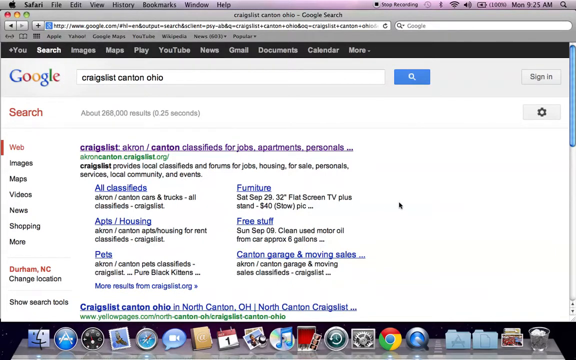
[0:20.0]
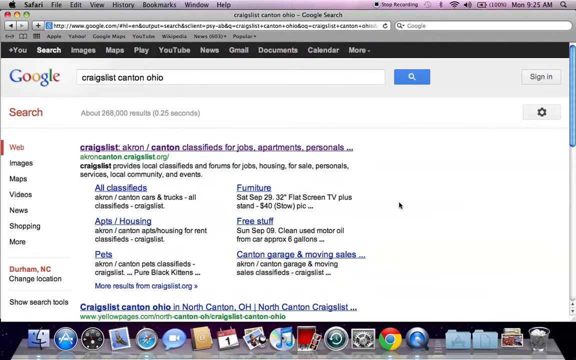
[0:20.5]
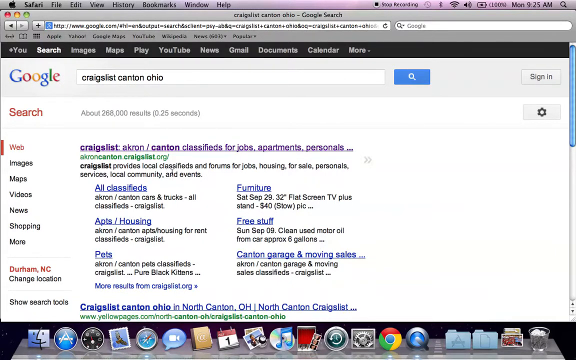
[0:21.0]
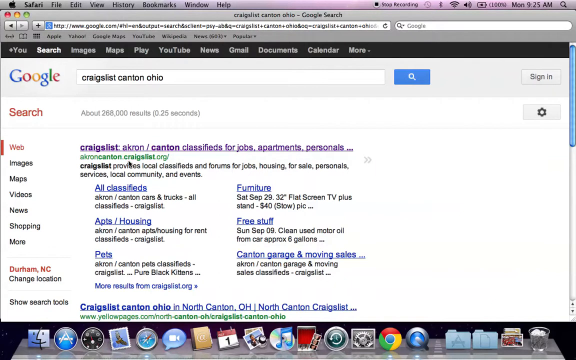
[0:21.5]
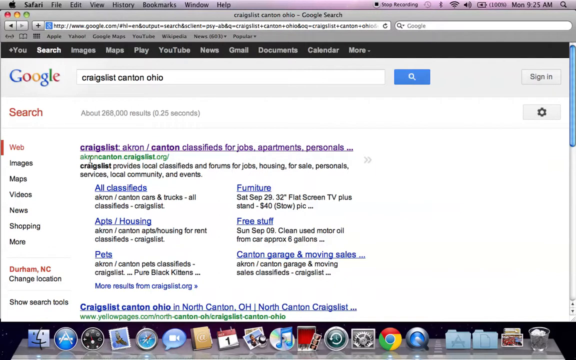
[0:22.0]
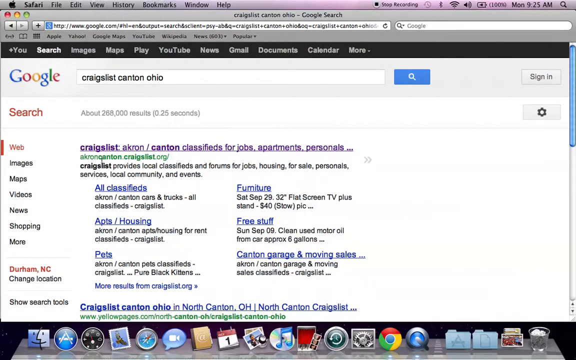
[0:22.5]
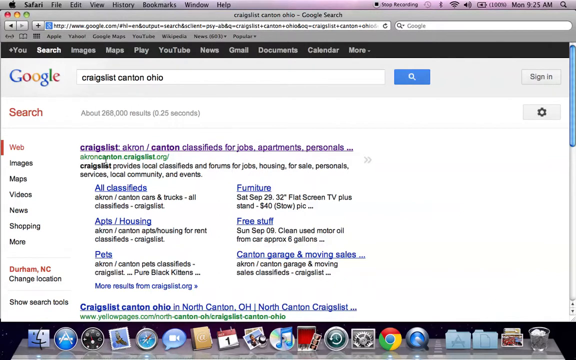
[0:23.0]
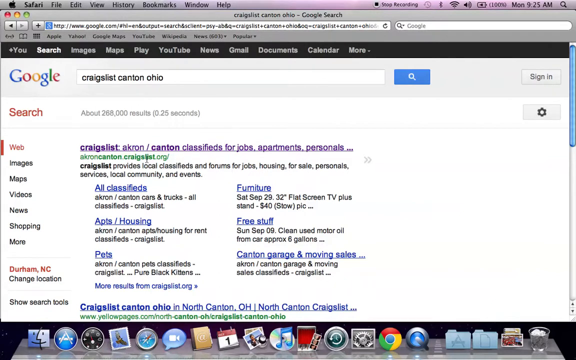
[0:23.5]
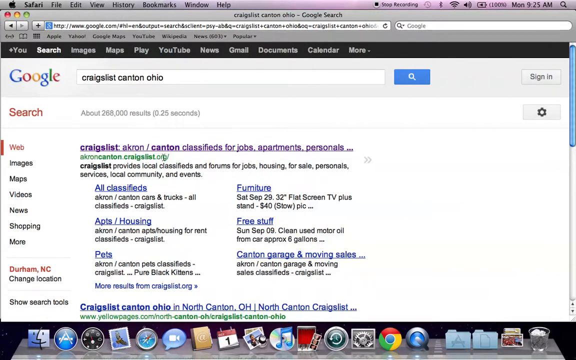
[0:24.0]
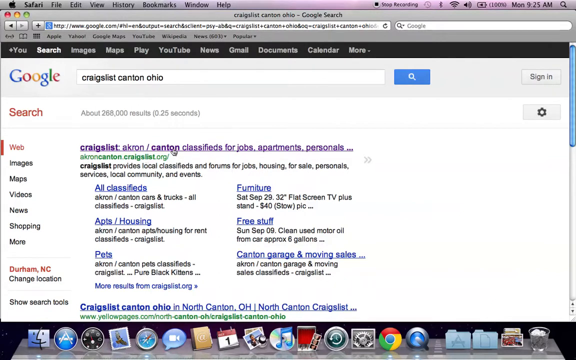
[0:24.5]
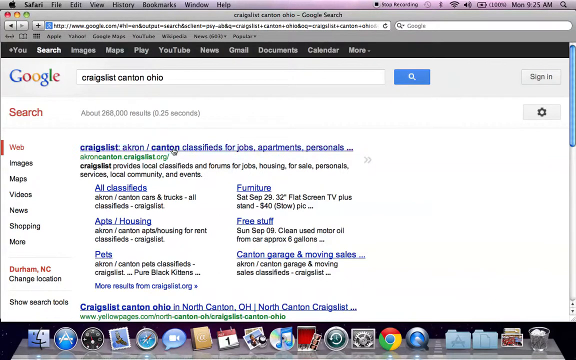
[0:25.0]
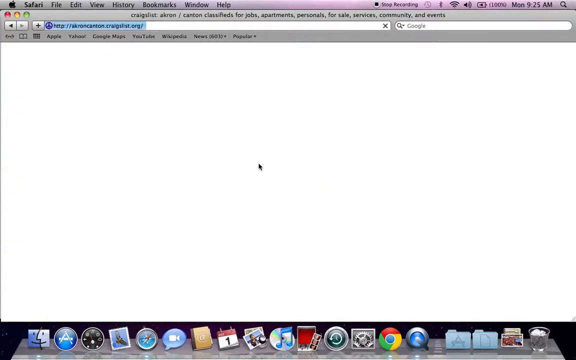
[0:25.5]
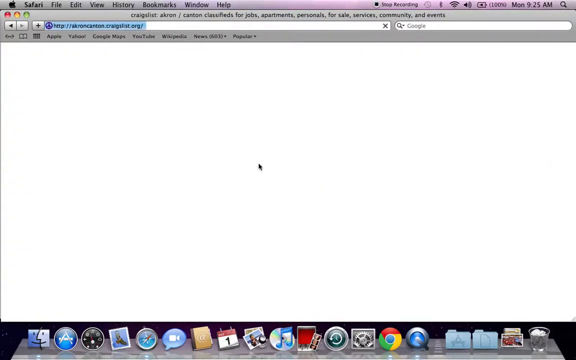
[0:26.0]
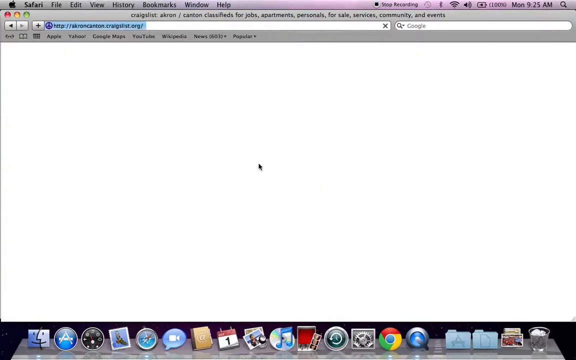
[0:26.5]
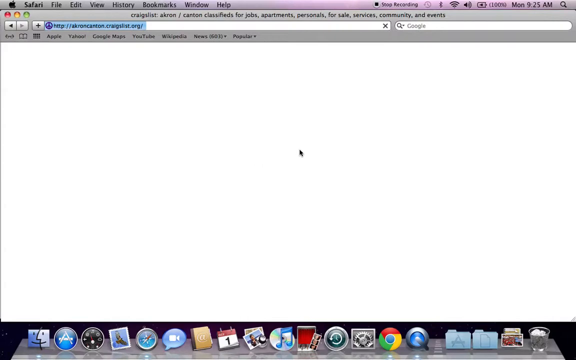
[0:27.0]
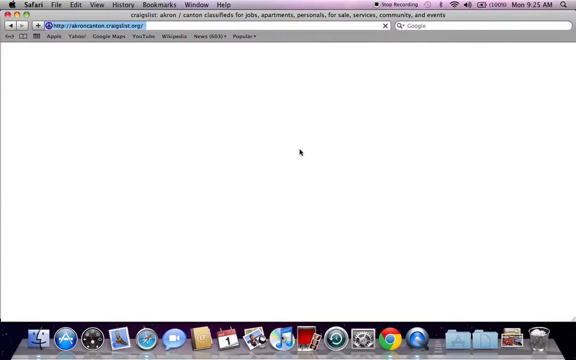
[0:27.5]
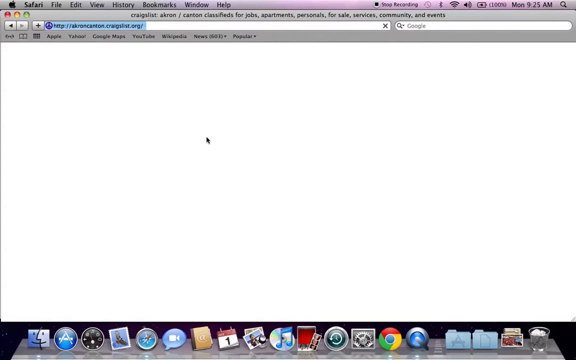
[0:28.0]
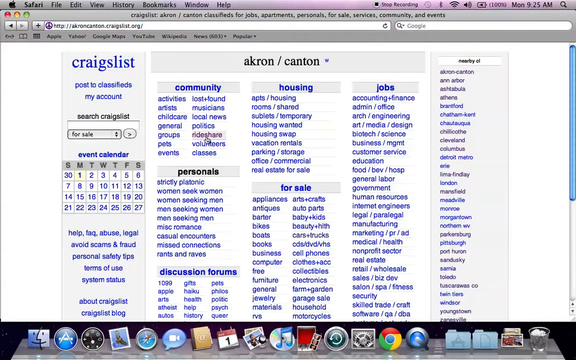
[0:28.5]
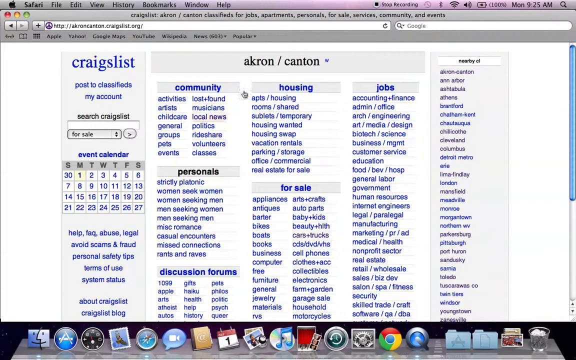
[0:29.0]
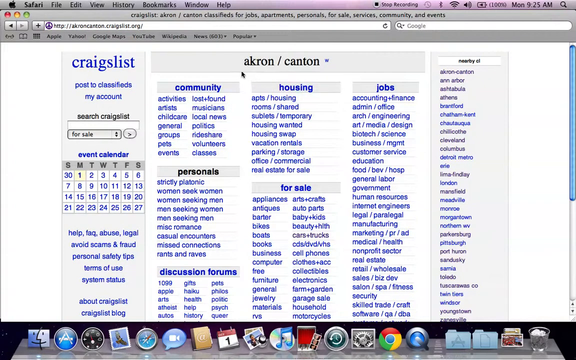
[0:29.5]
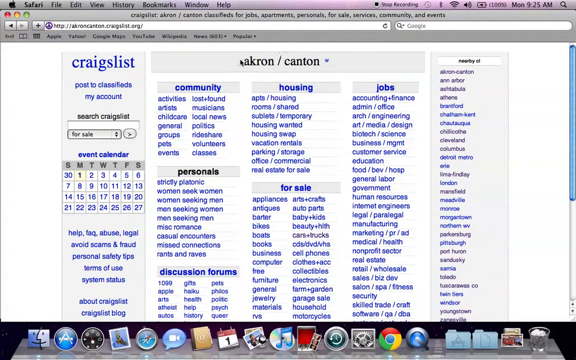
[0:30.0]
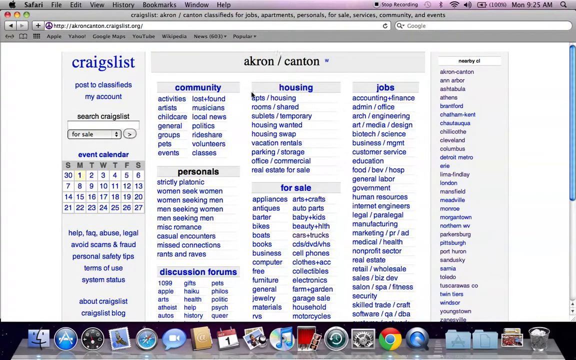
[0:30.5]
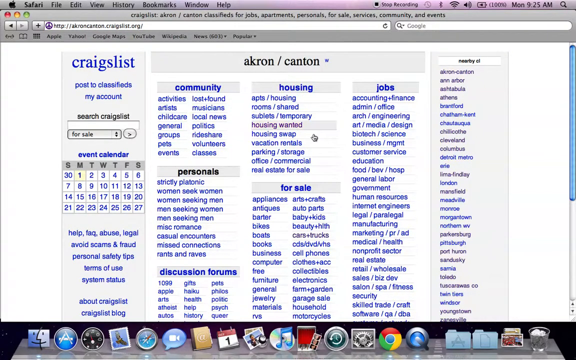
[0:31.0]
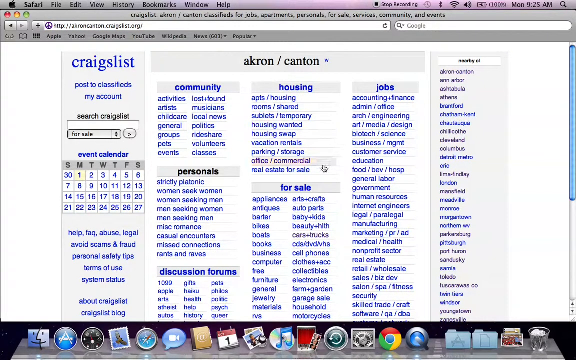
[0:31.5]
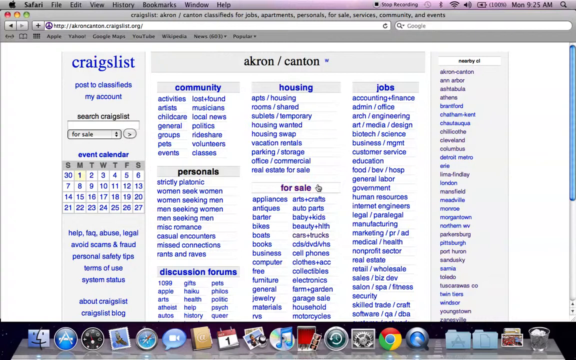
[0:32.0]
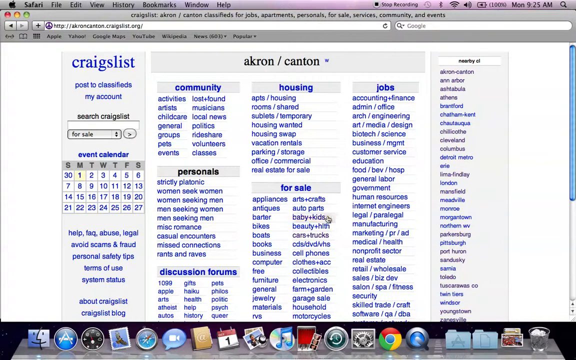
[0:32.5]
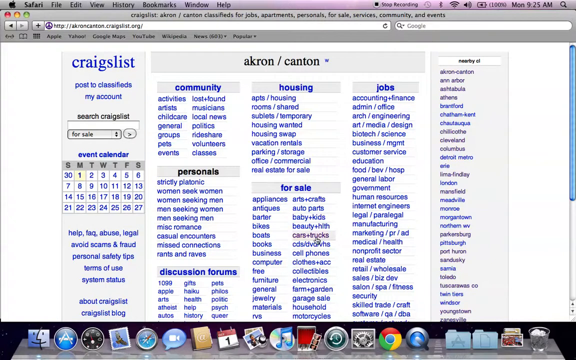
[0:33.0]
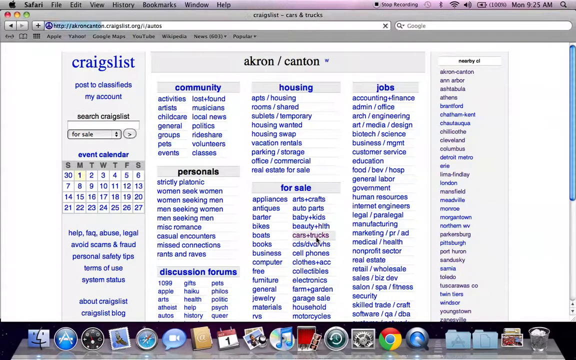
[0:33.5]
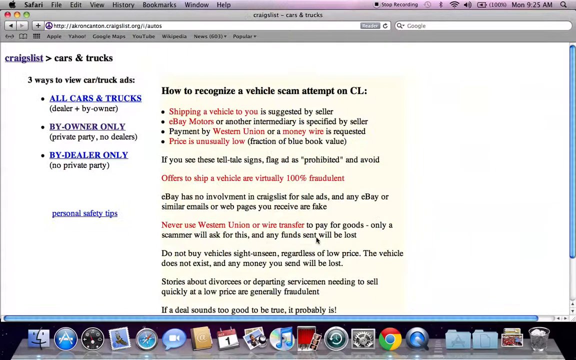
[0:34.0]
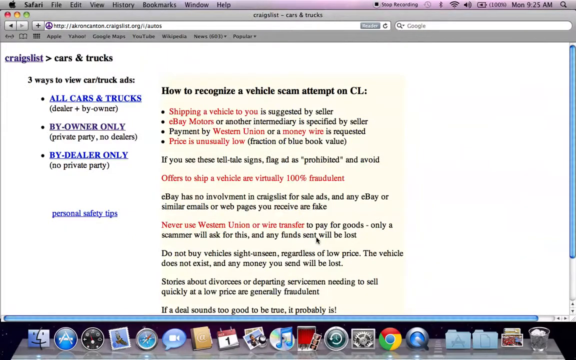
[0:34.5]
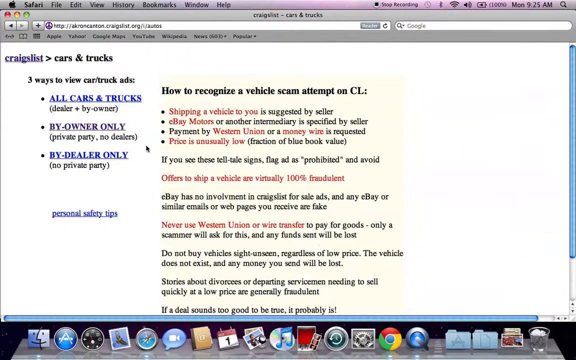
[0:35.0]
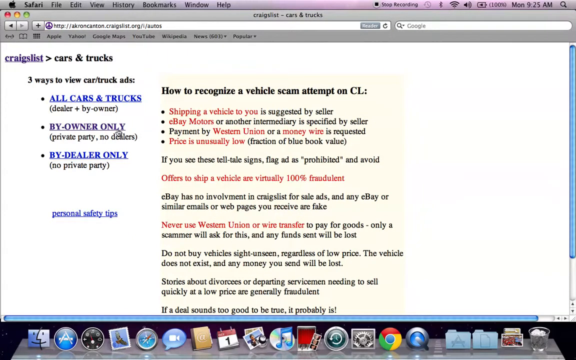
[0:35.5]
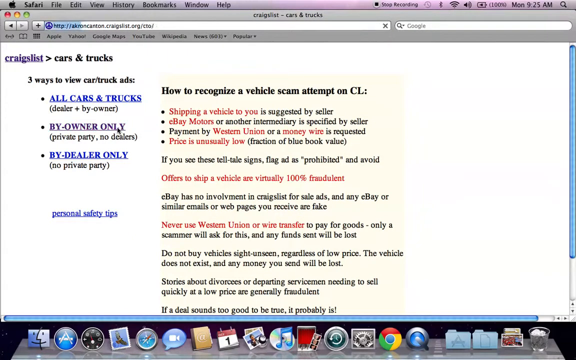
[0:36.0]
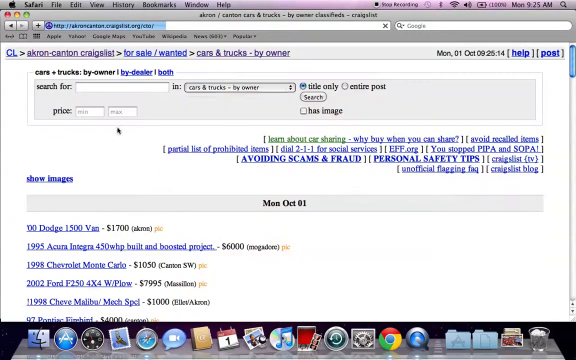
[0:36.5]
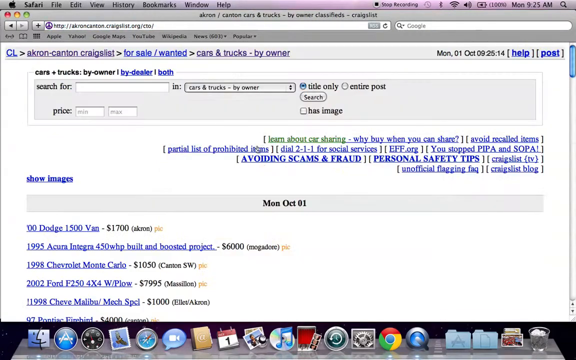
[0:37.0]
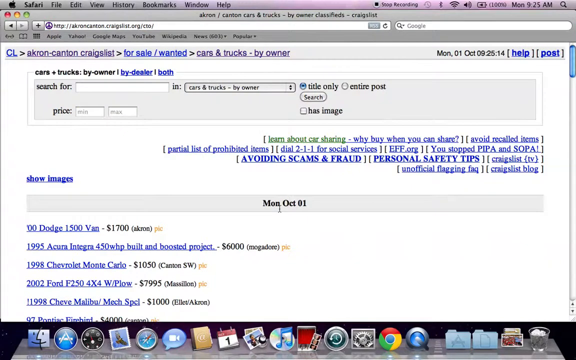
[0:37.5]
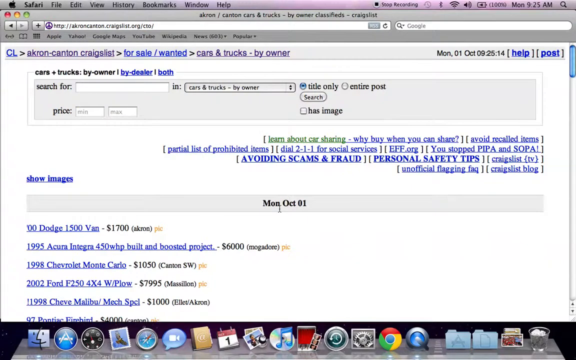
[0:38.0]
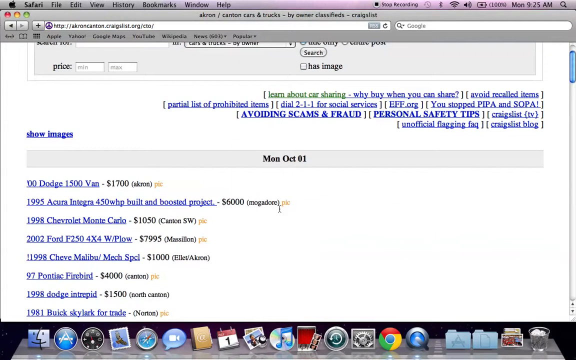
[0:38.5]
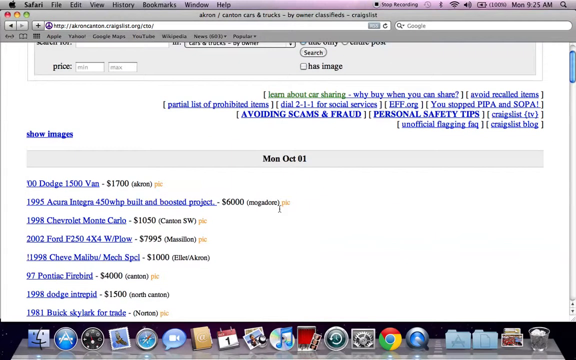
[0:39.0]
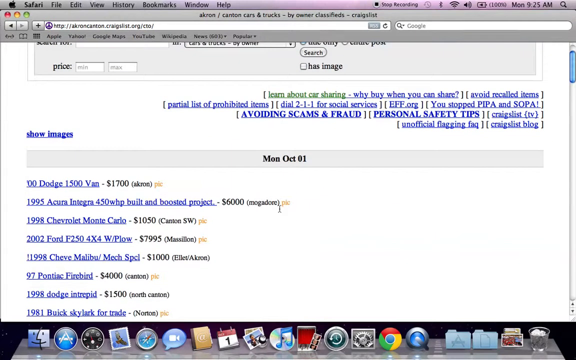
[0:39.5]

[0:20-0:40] A Google results page shows at the top that the search was "Craigslist Canton, Ohio". The main result is underlined in purple as if already clicked, reading Craigslist Akron/Canton "classifieds for jobs, apartments, personals". The mouse cursor is slightly over the green URL underneath it. Below, black text reads "Craigslist provides local classifieds and forums for jobs, housing, for sale, personals, services, local community, and events". Six pages are listed: the first row has "all classifieds", "apartments and housing" and "pets", and the second column has "furniture", "free stuff" and "Canton garage and moving sales". The screen turns blank, and then, apparently after a click, the typical Craigslist starting screen appears with "Akron/Canton" at the top. The cursor circles that, then circles around the for sale column and moves over "cars+trucks". Apparently it is clicked, because a window opens showing the cars and trucks section. At the top of the screen is "how to recognize a vehicle scam attempt on CL", but the cursor heads to the "by owner only" option on the left. It is clicked, and the view quickly skips to the next page, which shows a date of Monday, October 1st, with what looks like a bunch of cars listed underneath.